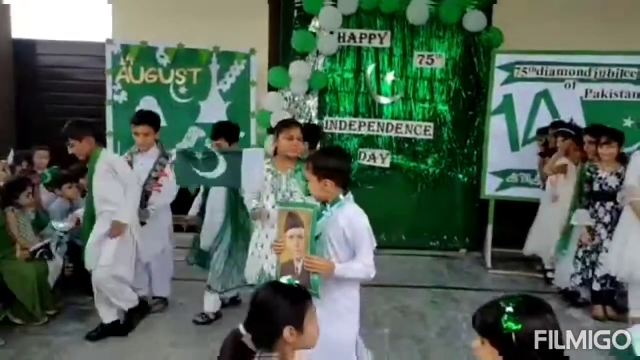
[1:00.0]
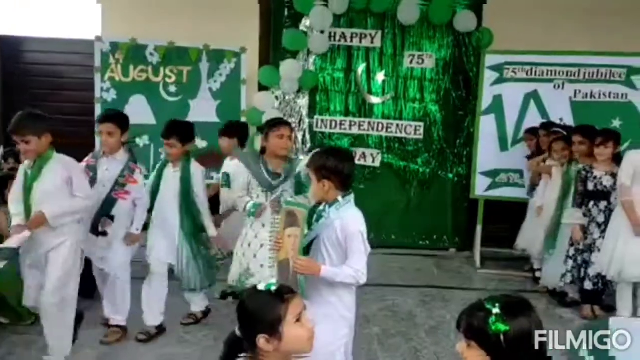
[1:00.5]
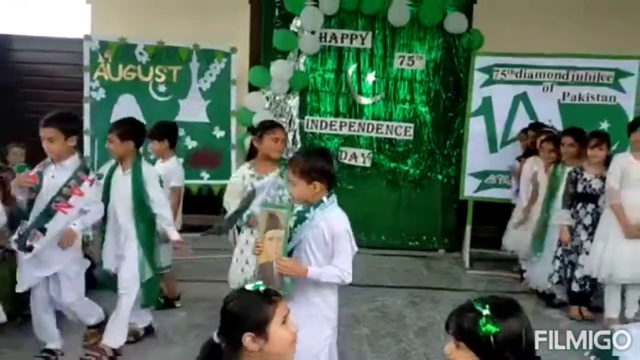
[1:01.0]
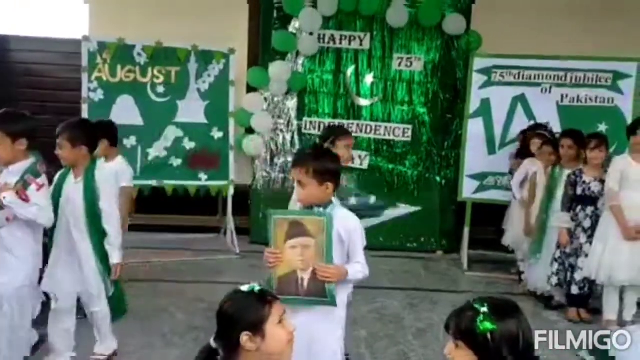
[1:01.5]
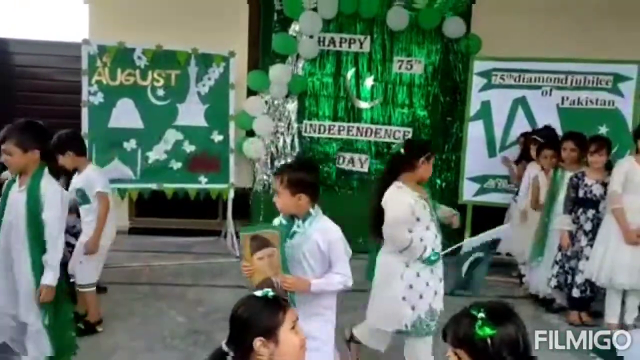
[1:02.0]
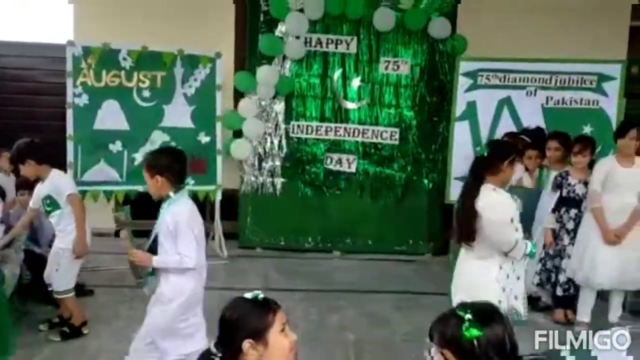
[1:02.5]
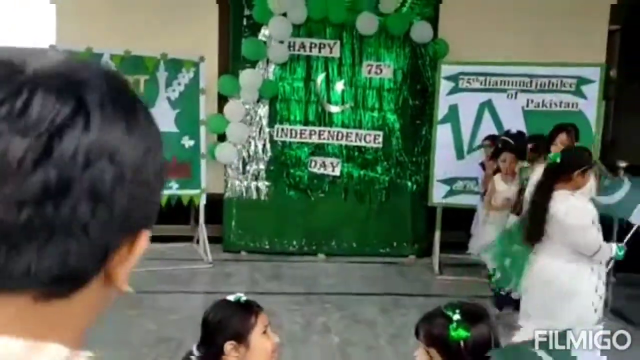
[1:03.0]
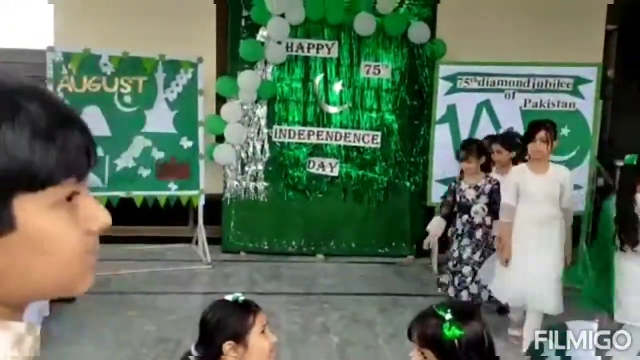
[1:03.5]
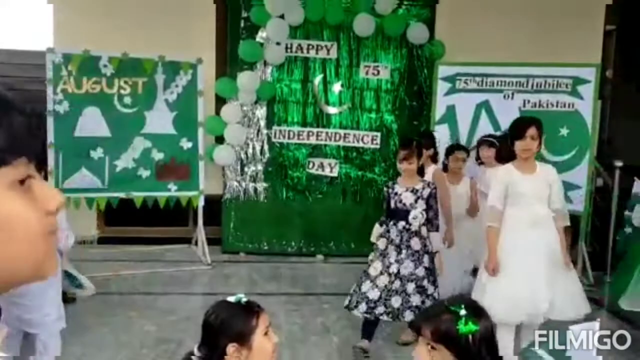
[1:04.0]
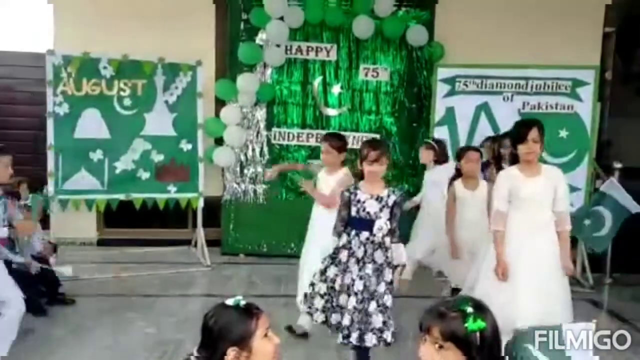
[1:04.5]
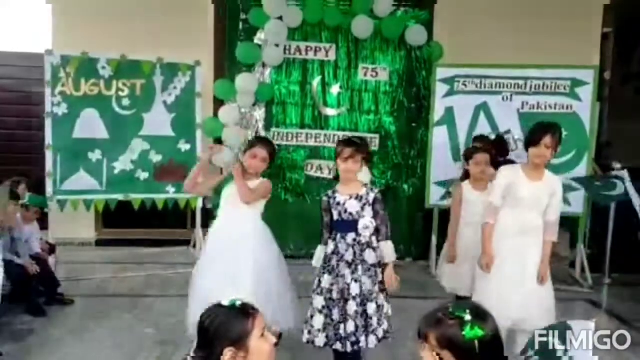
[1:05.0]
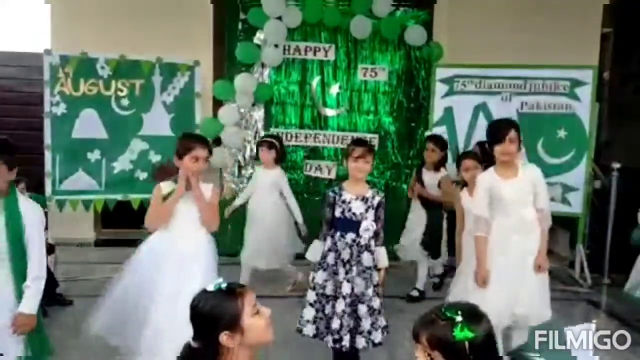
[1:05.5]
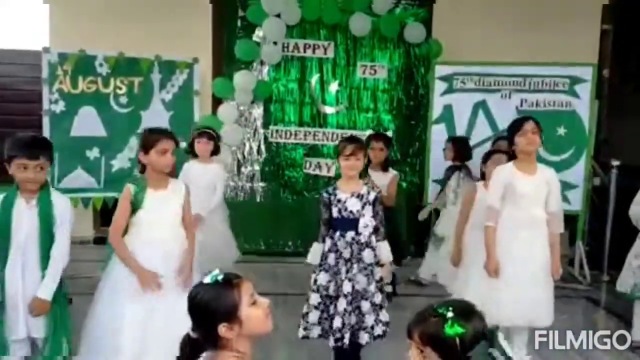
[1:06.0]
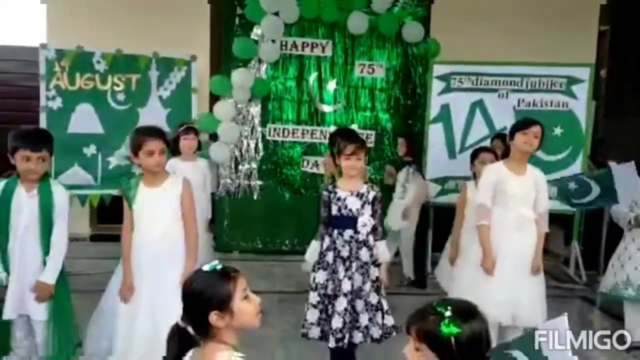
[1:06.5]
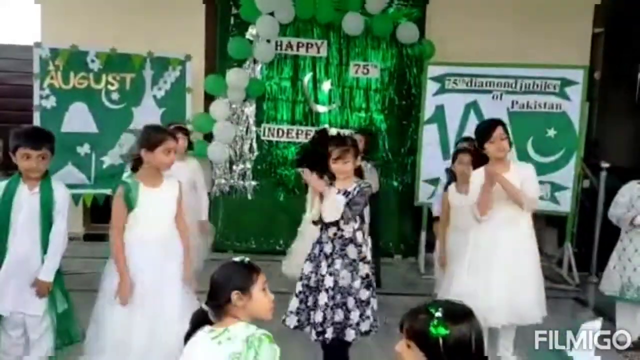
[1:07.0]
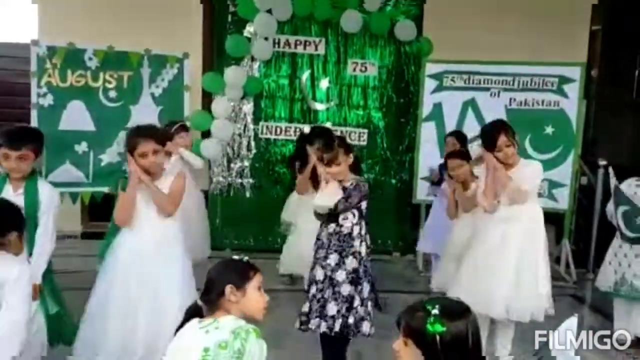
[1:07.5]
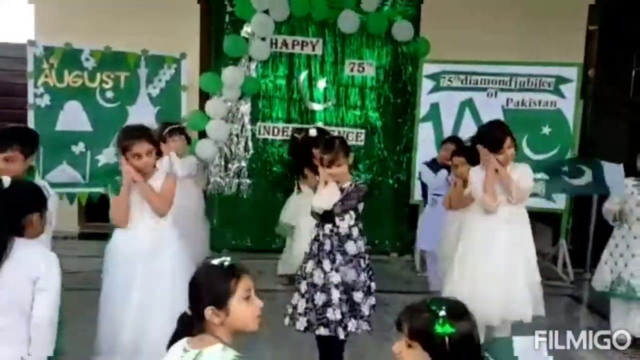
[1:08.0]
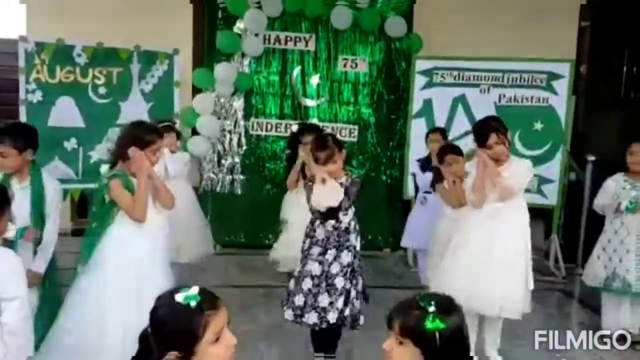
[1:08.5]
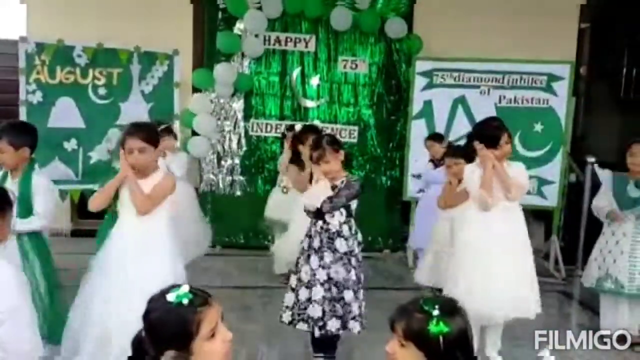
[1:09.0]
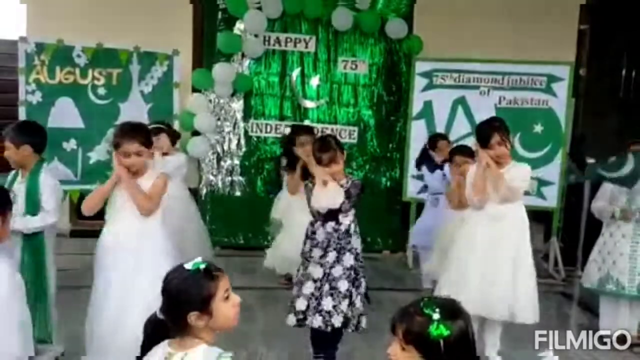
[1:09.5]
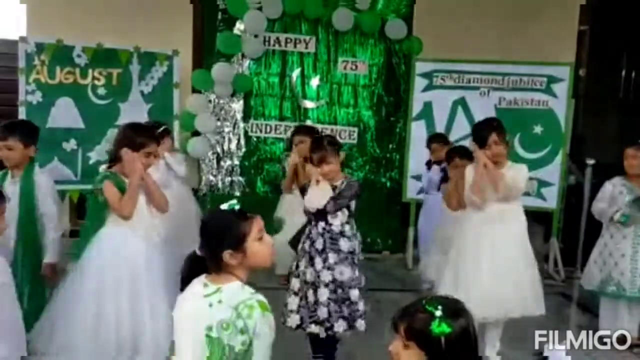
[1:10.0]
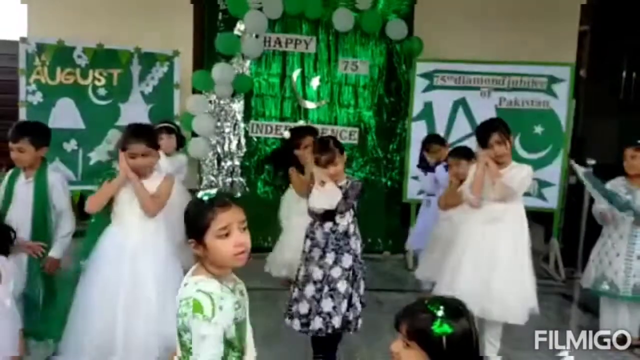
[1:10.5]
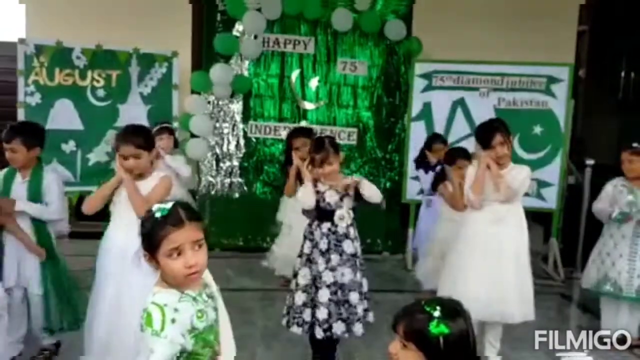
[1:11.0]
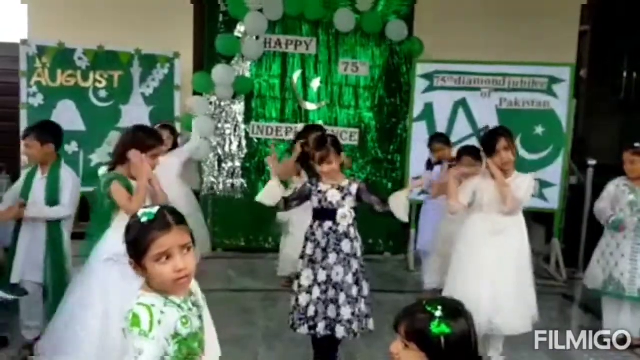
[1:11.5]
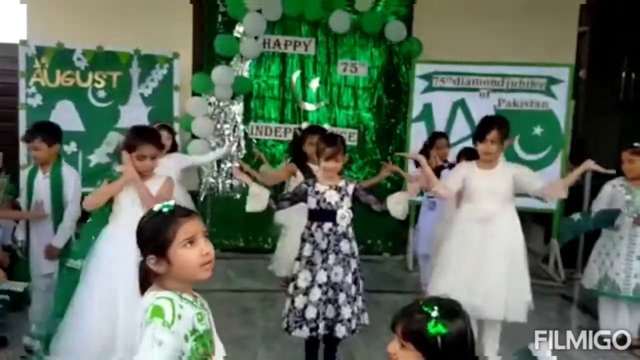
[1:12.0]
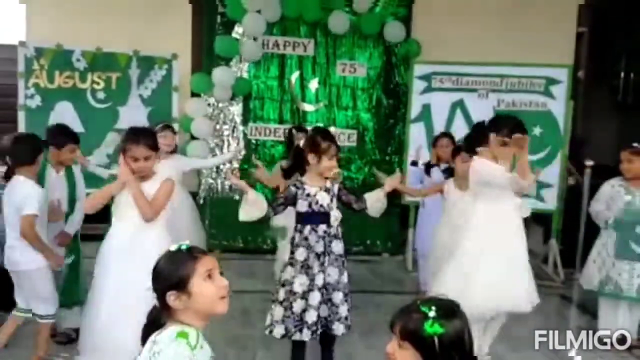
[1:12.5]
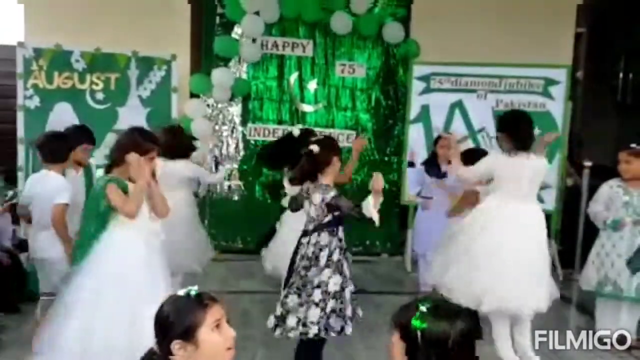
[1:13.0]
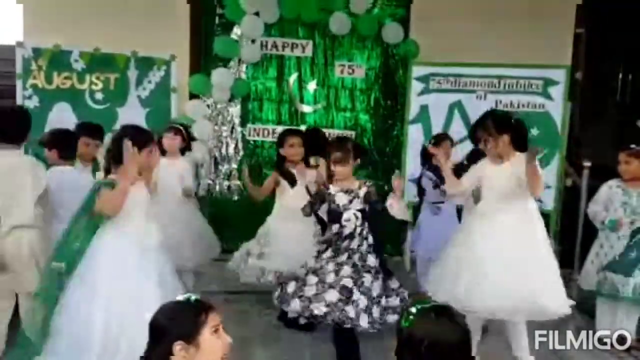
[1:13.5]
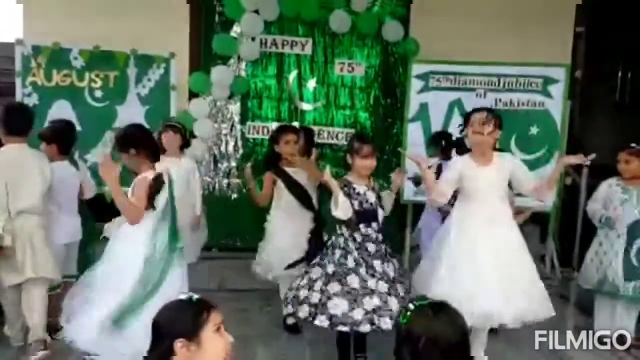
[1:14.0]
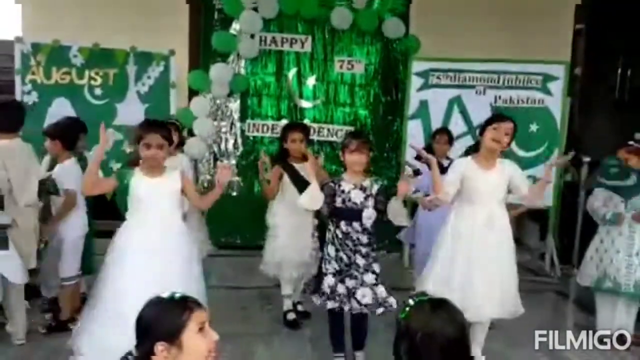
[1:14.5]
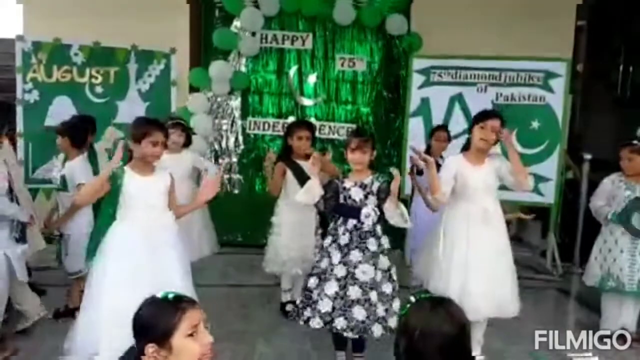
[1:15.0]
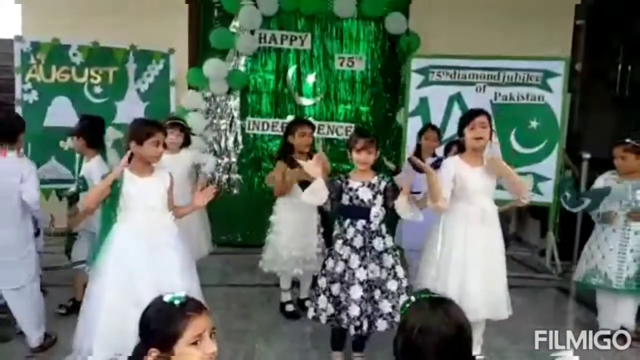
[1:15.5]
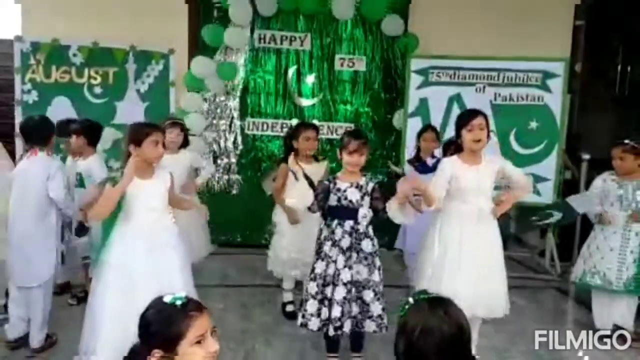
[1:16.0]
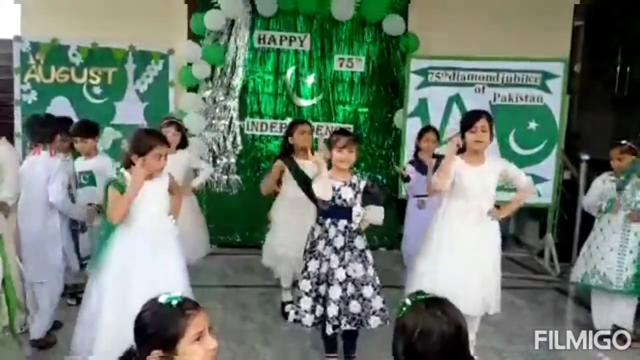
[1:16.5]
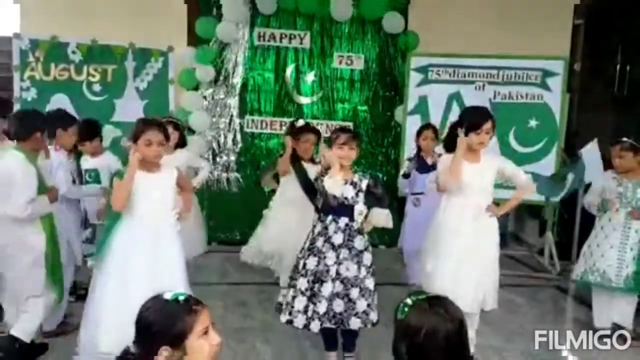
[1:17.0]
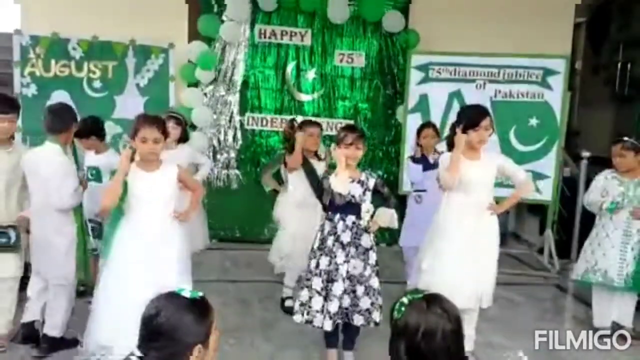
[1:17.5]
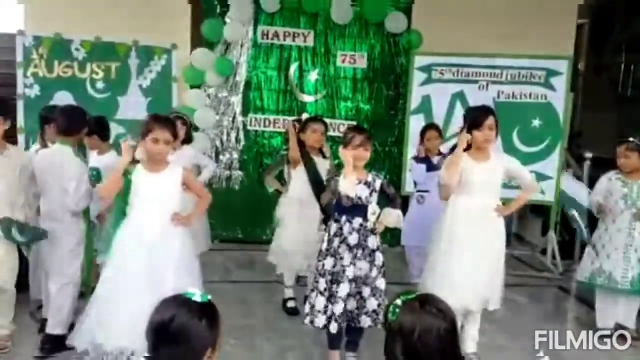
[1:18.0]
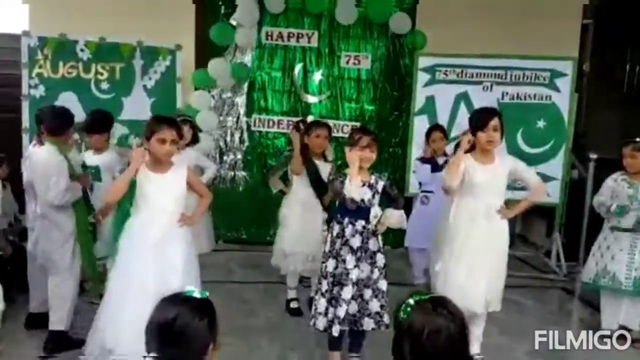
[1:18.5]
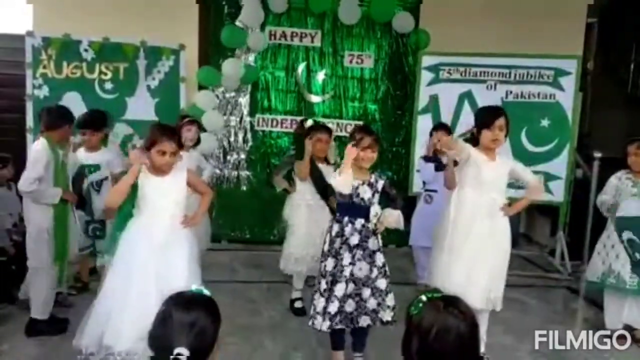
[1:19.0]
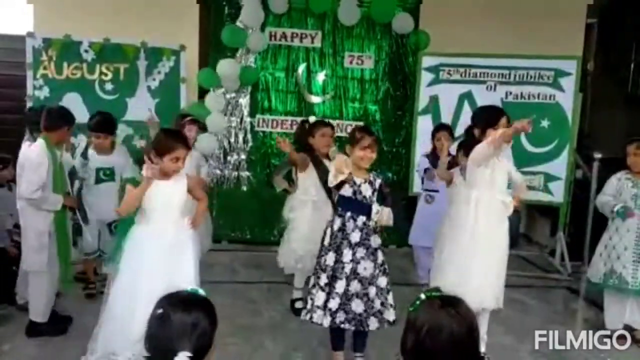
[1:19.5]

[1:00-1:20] The girl and the boys from the row of boys walk off, and the row of girls disperses and kind of organizes itself in the middle of the room, then all of them dance. They first make a sleeping motion, then stretch their arms out, twirl once, tap a right finger against their heads, and make kind of a pointing dance move around. The boy holding up the picture is to the left of them; it is unclear whether he joins the dance. On the left-hand side of the room a bunch of kids sit, and behind them is what looks like a black or dark brown gate leading somewhere else. The floor looks to be kind of a gray concrete or similar material. Across the room, other groups of children also sit.